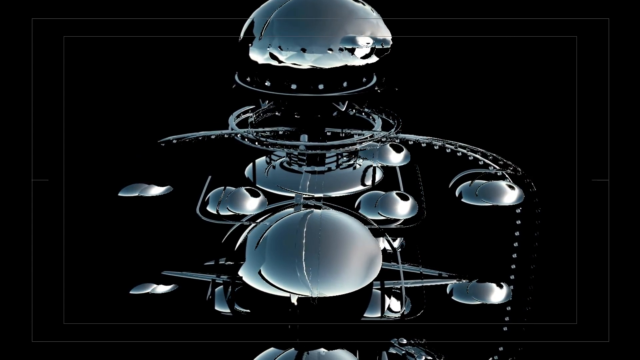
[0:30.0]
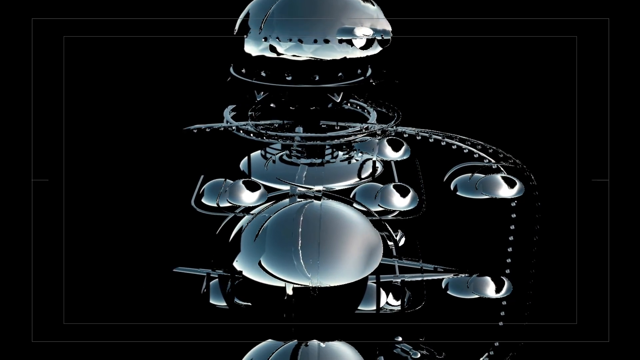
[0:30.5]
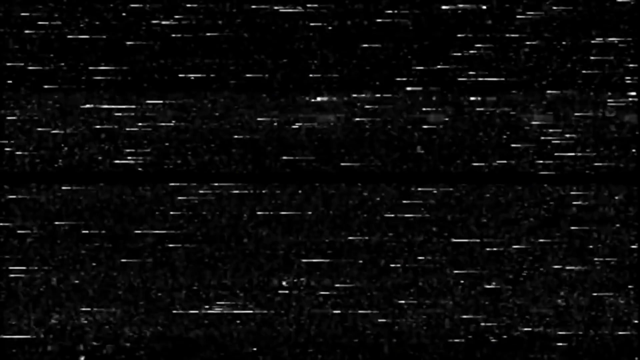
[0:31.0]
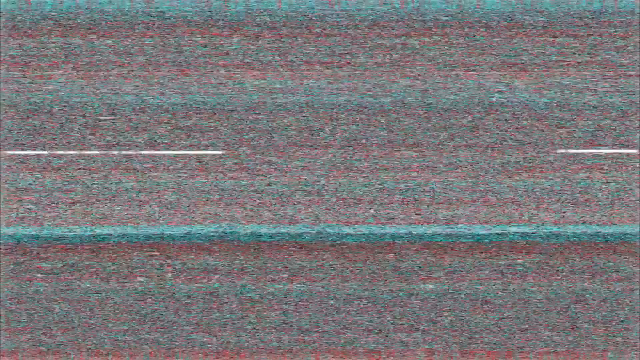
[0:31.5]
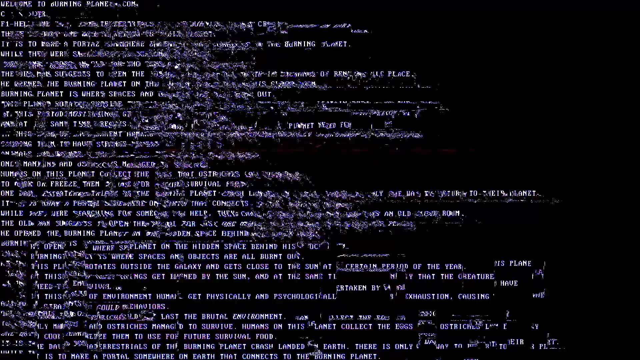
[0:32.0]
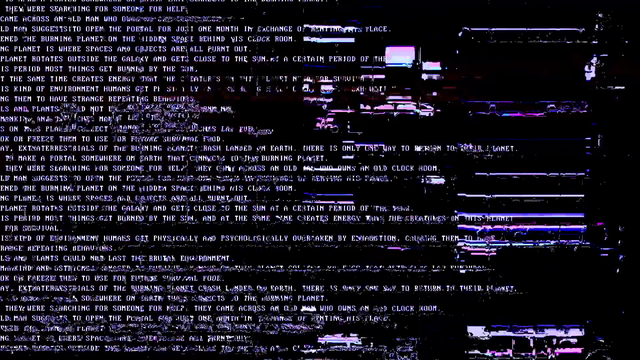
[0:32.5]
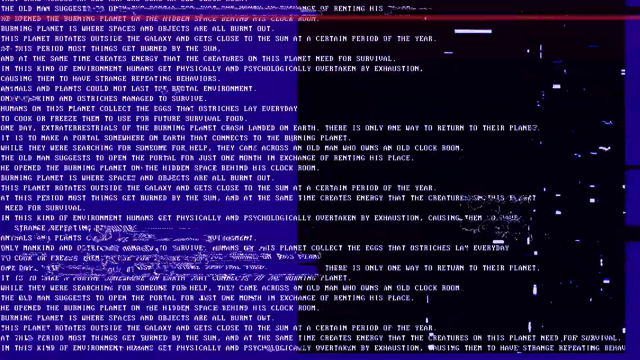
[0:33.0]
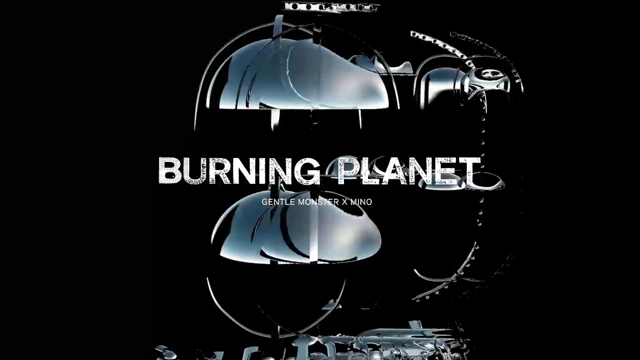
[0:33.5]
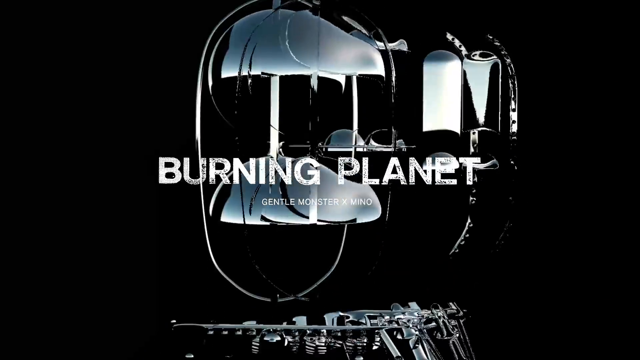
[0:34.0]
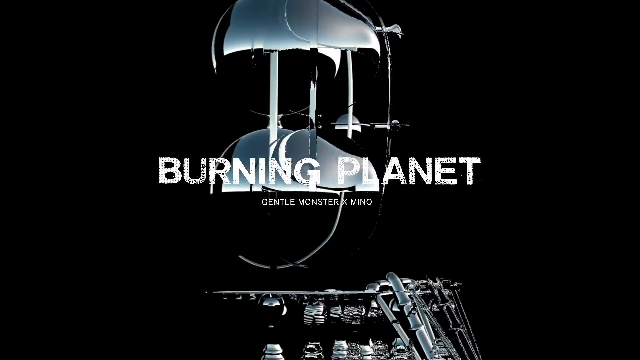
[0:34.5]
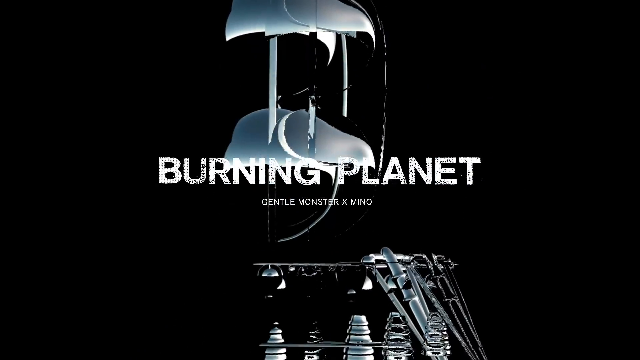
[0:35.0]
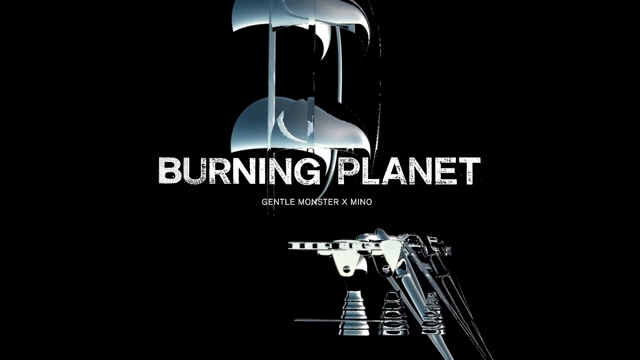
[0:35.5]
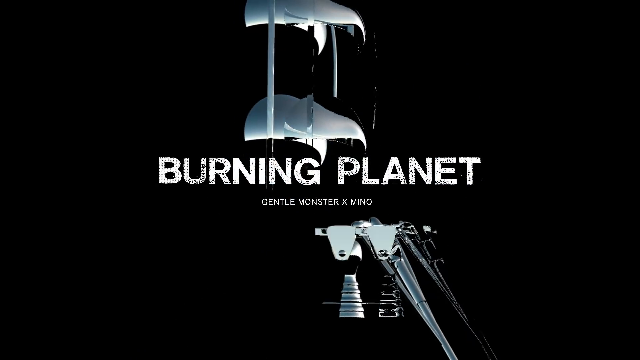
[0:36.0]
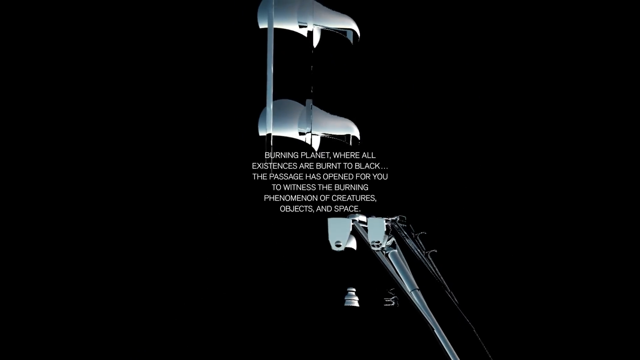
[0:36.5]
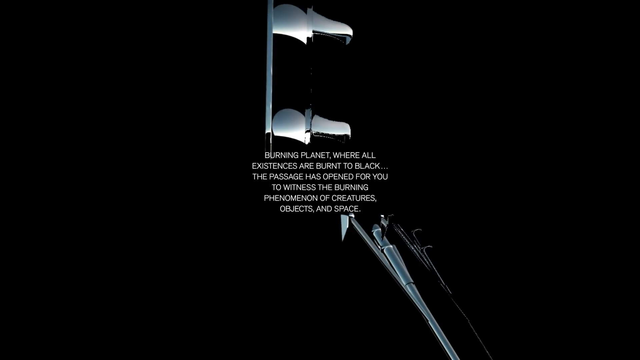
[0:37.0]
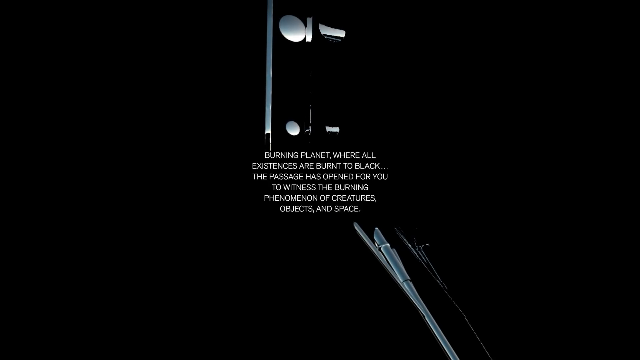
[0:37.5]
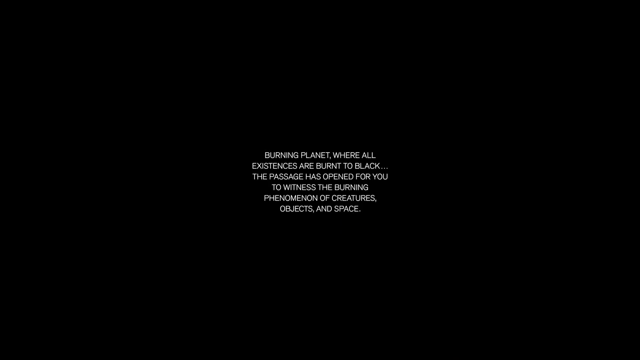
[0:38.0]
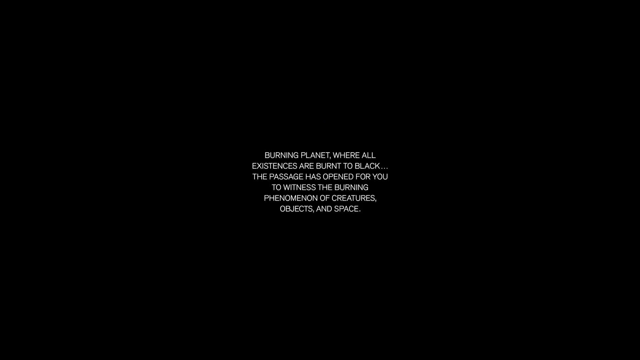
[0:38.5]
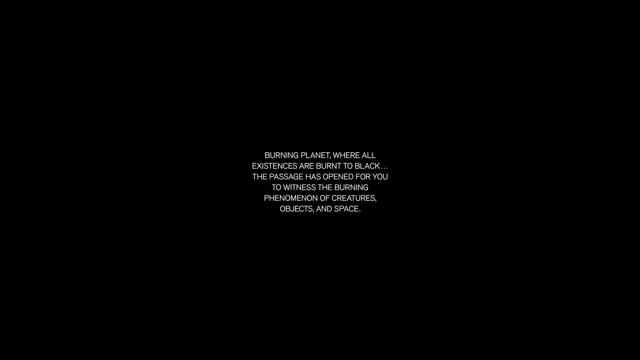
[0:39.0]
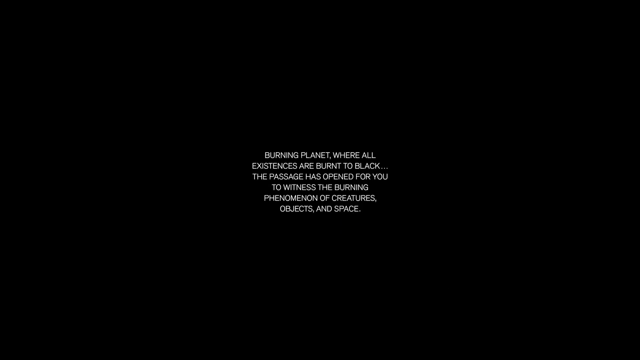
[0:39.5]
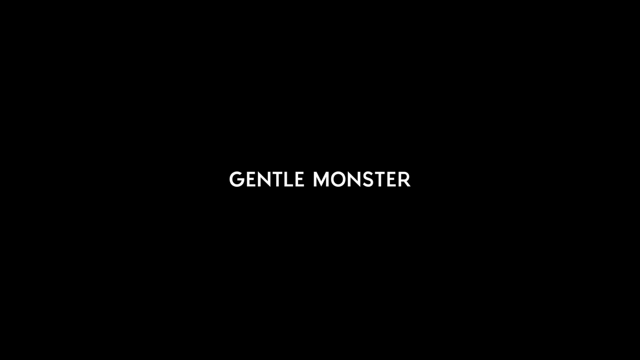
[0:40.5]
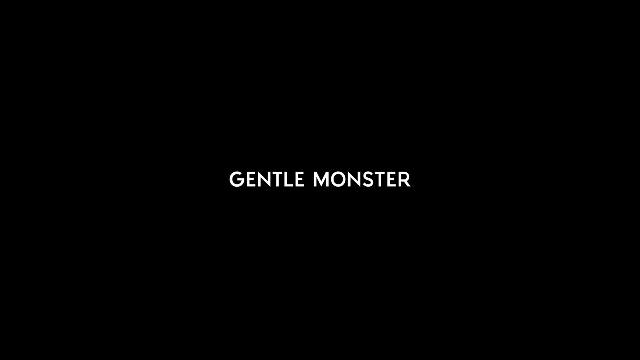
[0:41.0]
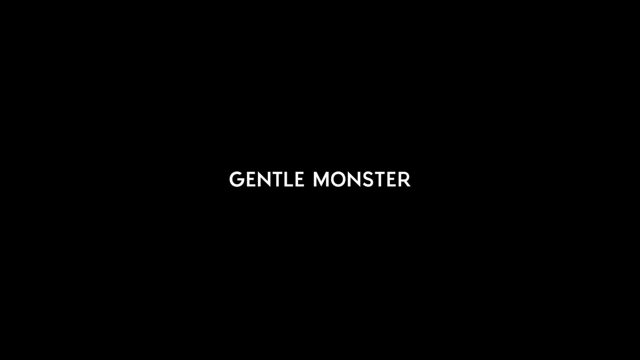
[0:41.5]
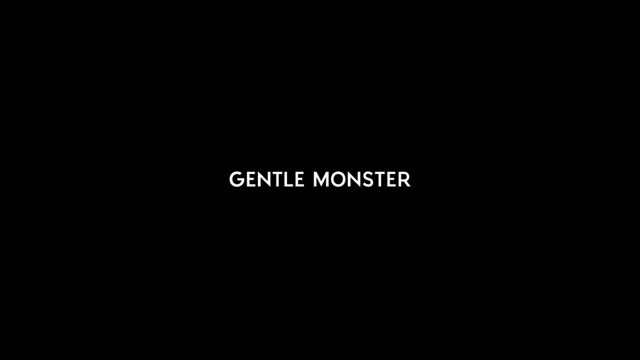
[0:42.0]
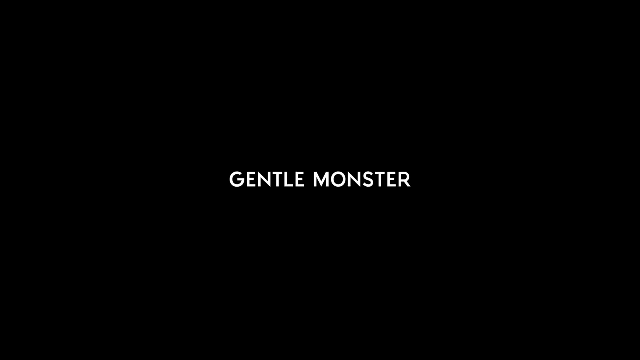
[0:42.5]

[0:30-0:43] An object that looks like it belongs in space appears. The video then goes to screens of a computer apparently showing written programs, bouncing back and forth a lot. Text appears reading "Burning Planet," followed by another metal object, and then text reading "Gentle Monster." The screen turns into a bunch of lines that are not really distinct lines, in red, teal, and brown, looking sort of woven; the lines are indistinct but the colors are clear.